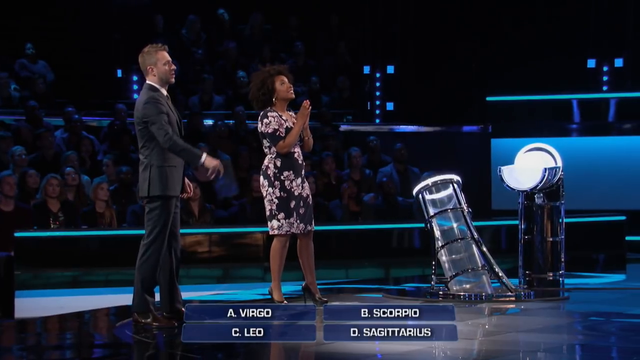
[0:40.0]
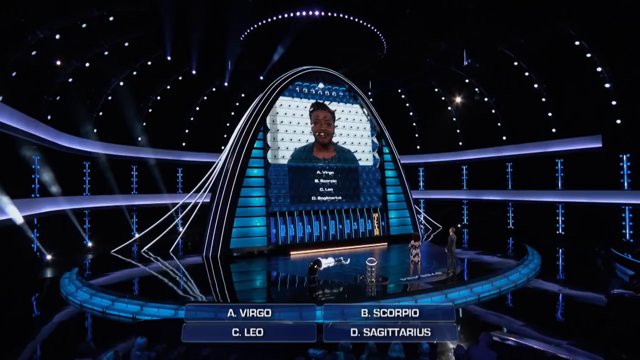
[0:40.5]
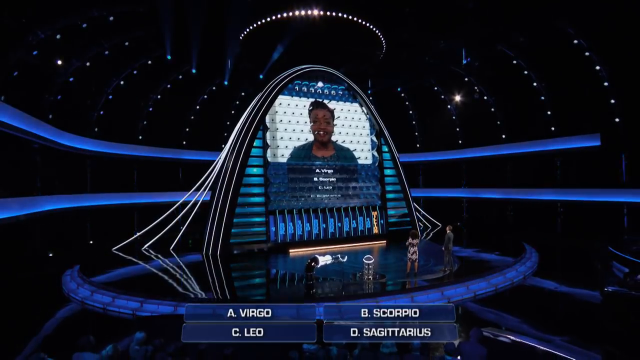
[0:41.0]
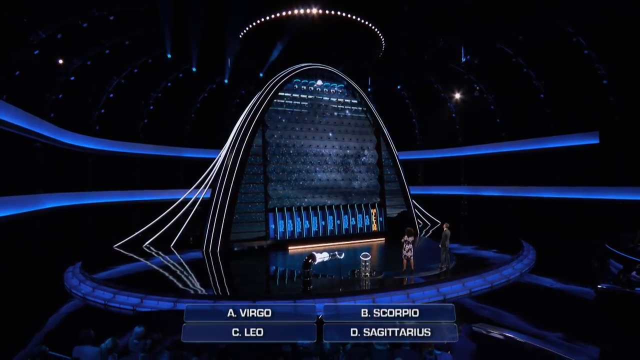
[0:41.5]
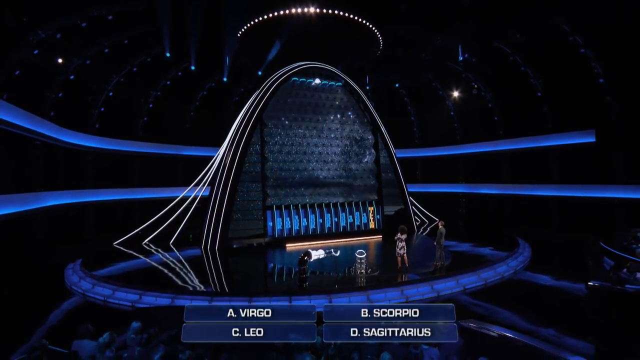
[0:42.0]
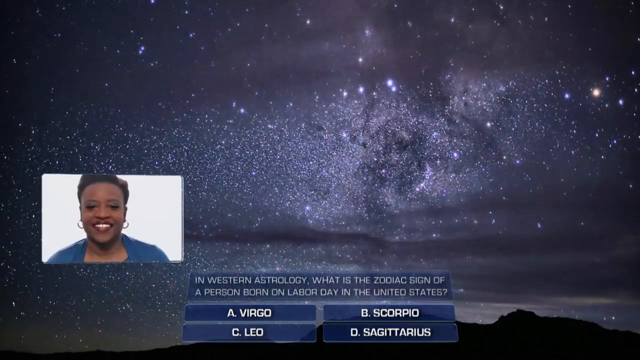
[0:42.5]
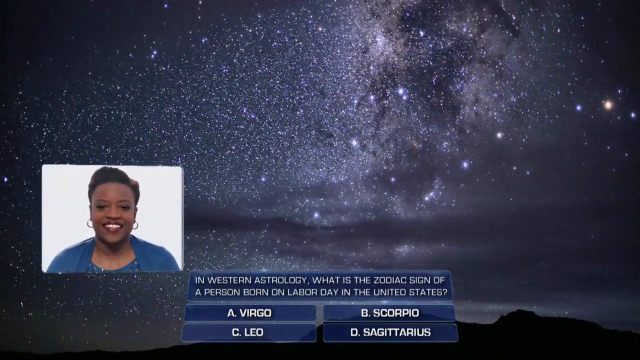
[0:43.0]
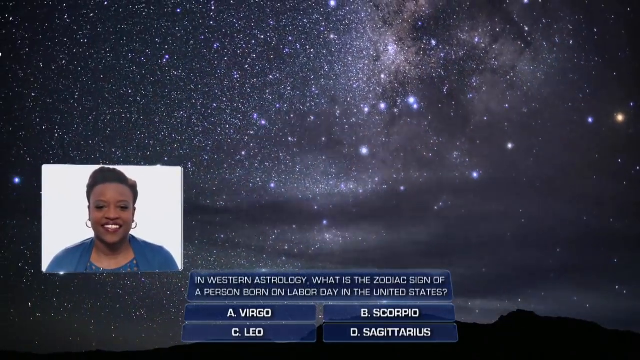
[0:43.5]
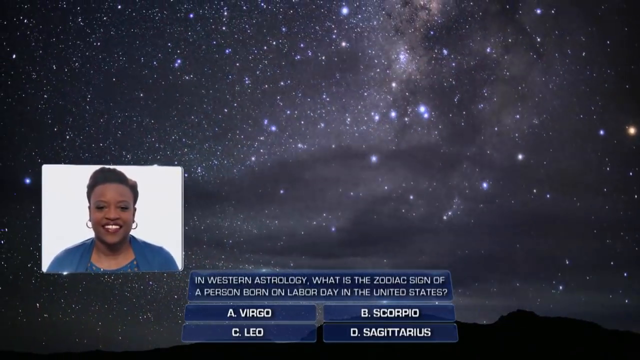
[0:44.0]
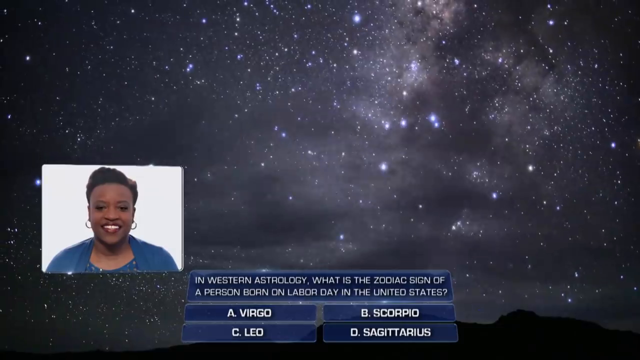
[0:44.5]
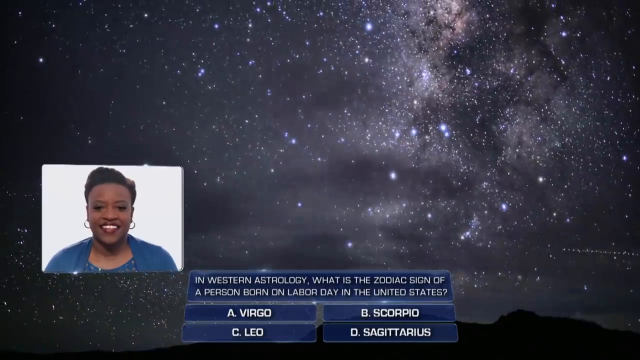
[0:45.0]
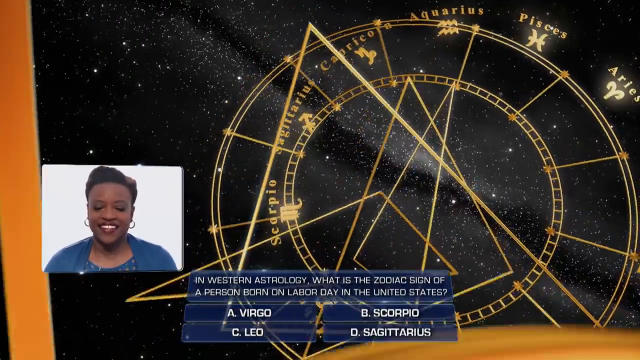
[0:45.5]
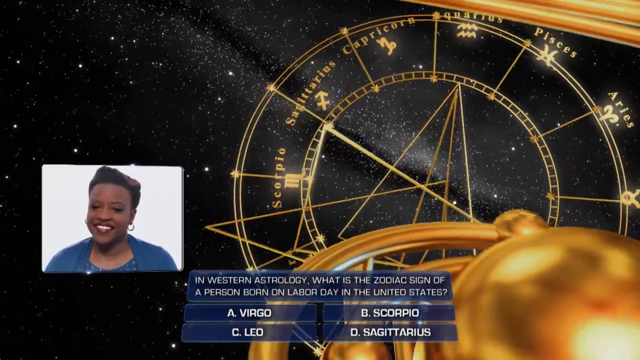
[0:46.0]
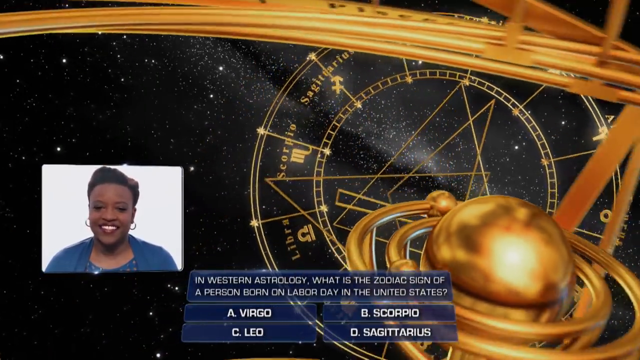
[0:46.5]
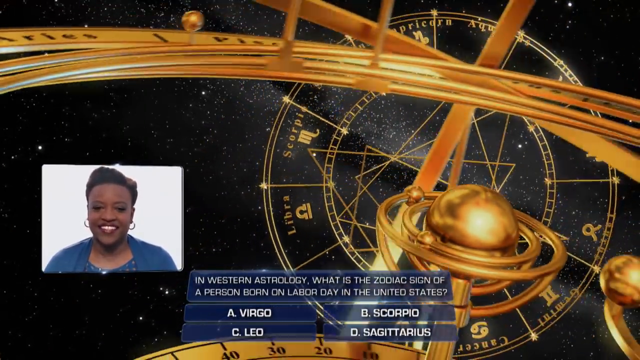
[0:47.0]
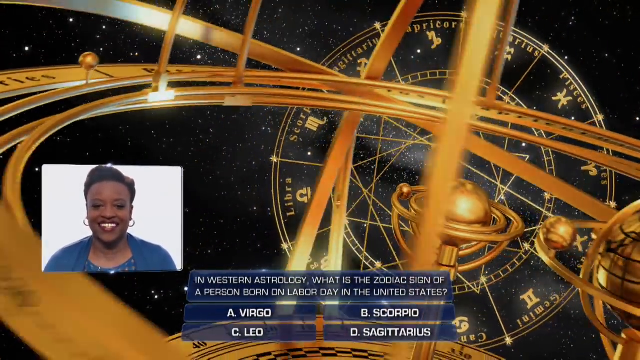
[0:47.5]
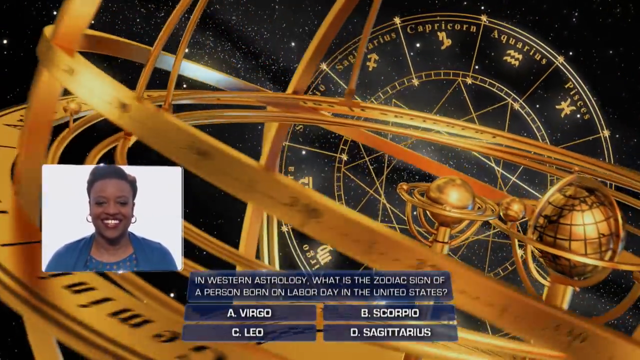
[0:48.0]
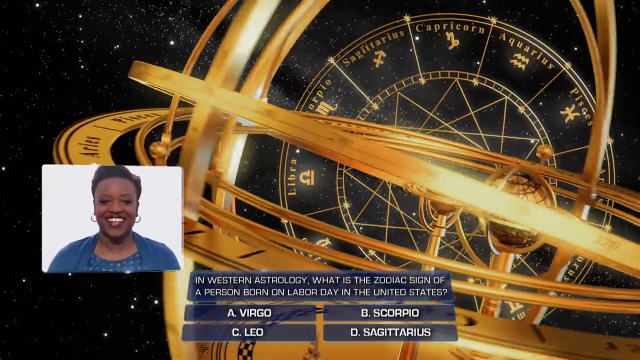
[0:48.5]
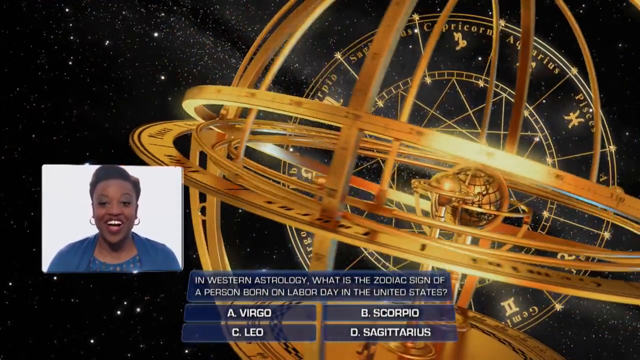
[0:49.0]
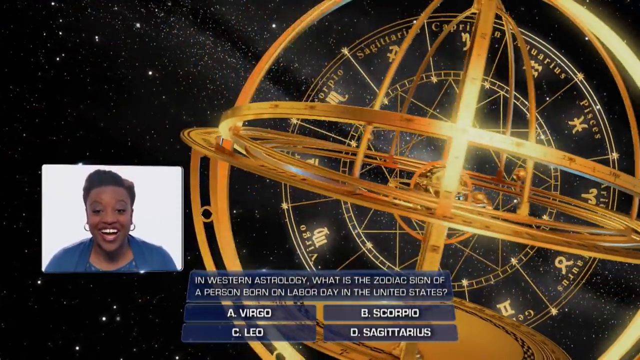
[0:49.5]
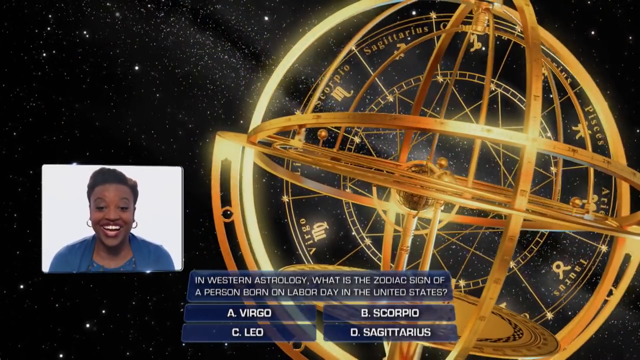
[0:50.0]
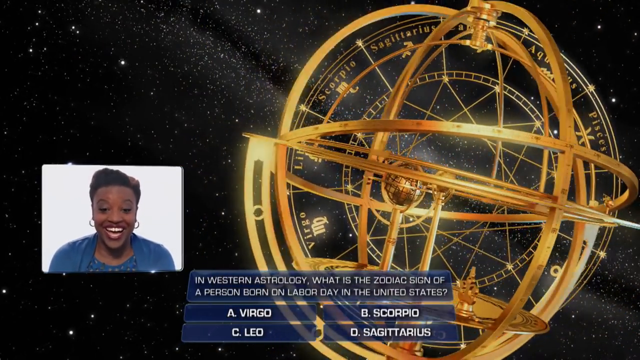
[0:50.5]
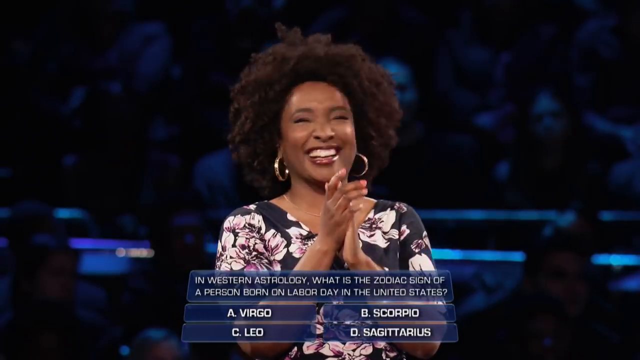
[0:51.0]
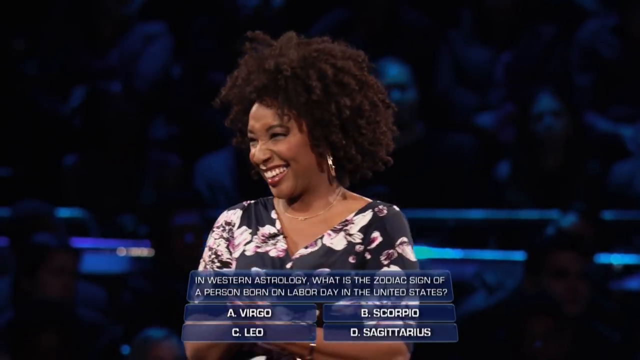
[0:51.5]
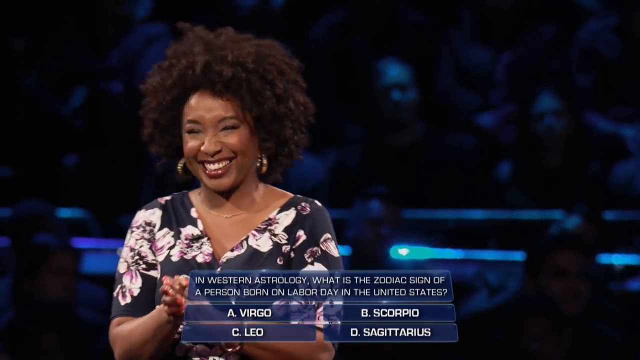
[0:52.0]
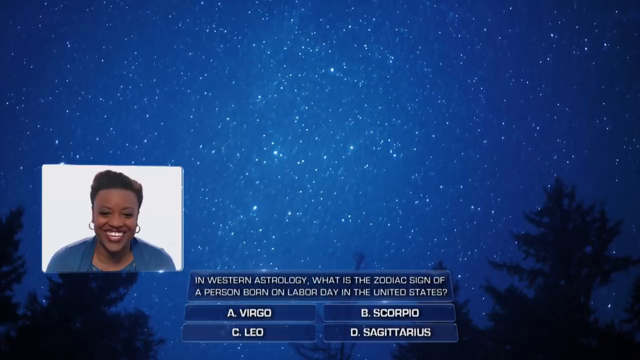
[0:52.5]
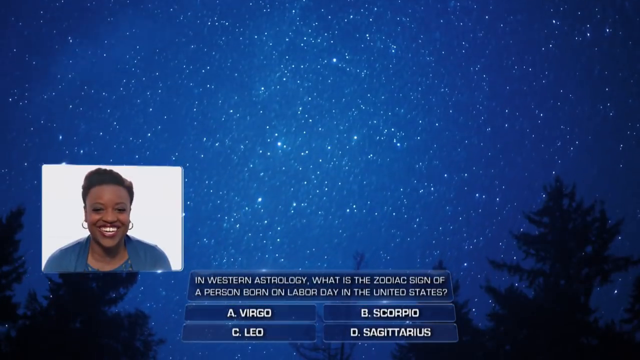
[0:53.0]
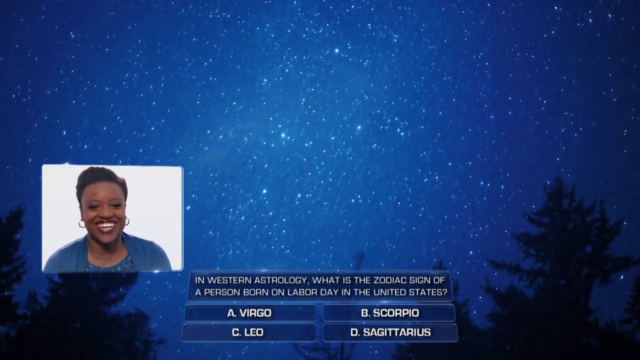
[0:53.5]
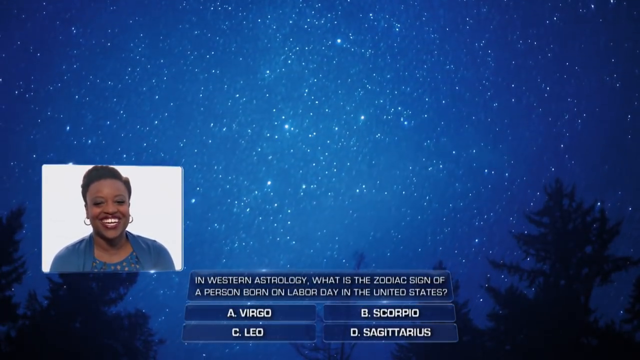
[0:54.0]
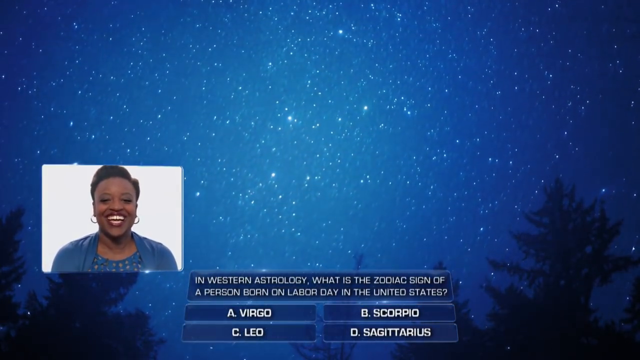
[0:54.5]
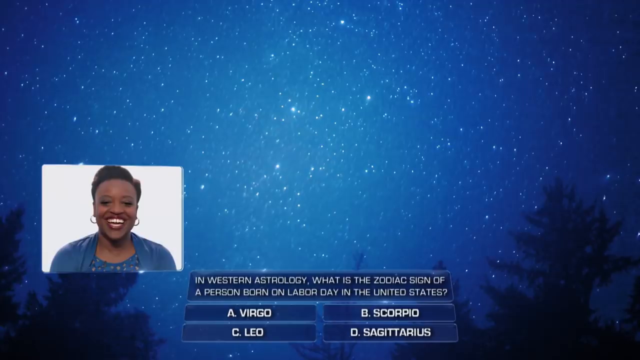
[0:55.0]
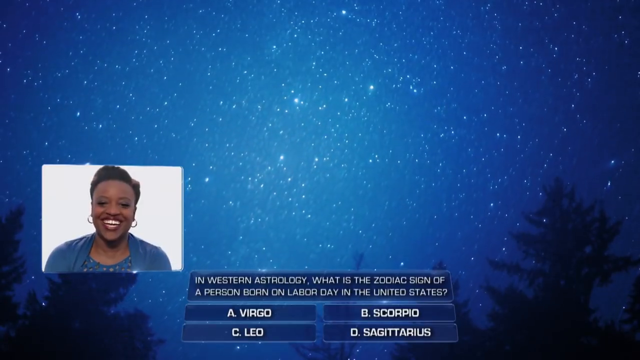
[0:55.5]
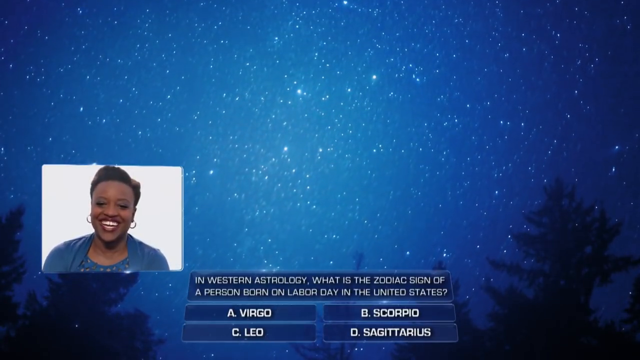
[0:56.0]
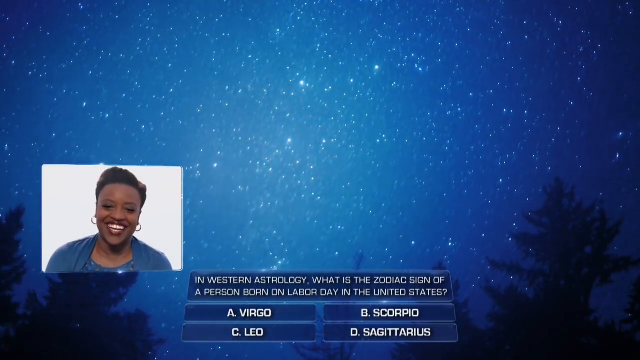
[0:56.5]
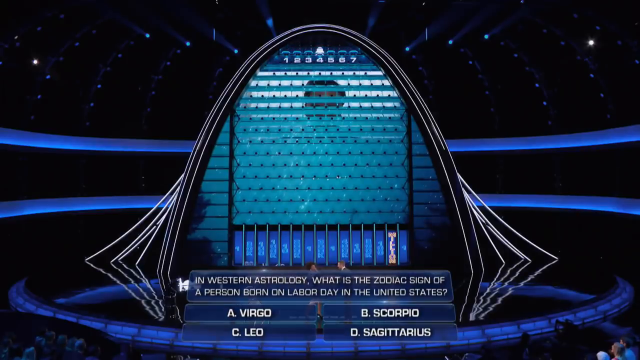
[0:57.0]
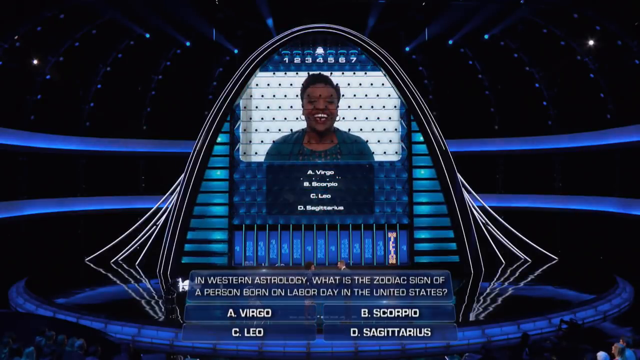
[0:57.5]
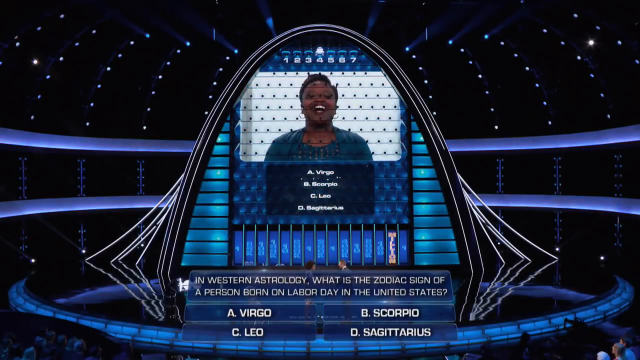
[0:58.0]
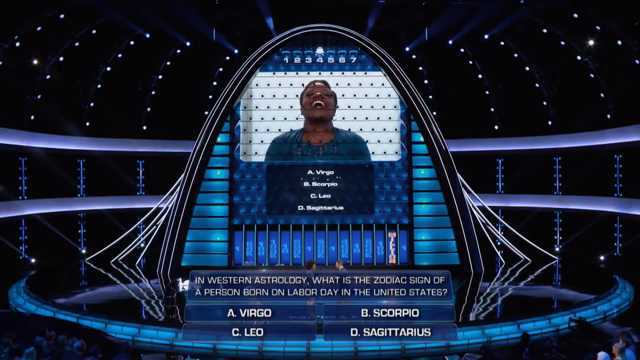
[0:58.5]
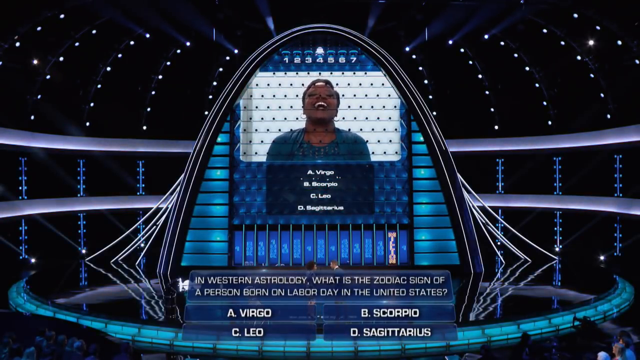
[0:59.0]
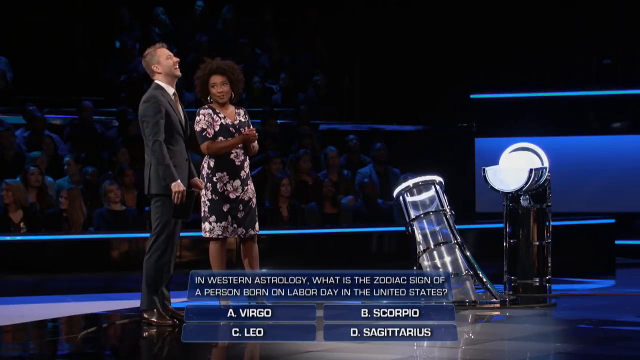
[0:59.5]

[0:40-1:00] The talk show host and the Black woman stand in front of the screen, looking at the picture of the Black woman with short hair as it slowly disappears from the giant blue screen in front of them. Another small picture of a Black woman appears on the left of the screen, and text on the right side says "in Western astrology, what is the zodiac sign of a person born on Labor Day in the United States," with multiple choices "A. Virgo, B. Scorpio, C. Leo, and D. Sagittarius." Graphics move on the screen, such as an astrological chart with all the signs. The woman laughs, and the Black woman on the screen laughs too. The two of them then look at the giant blue screen with the picture of the Black woman on it in front of them.